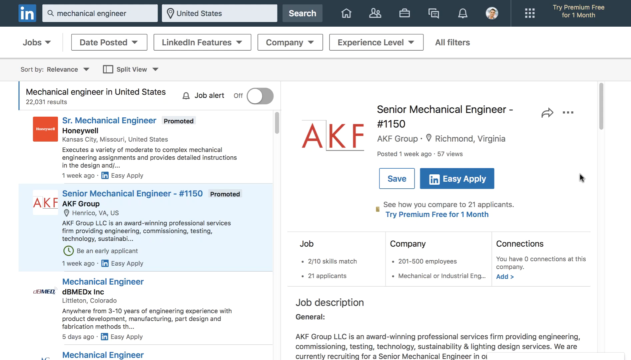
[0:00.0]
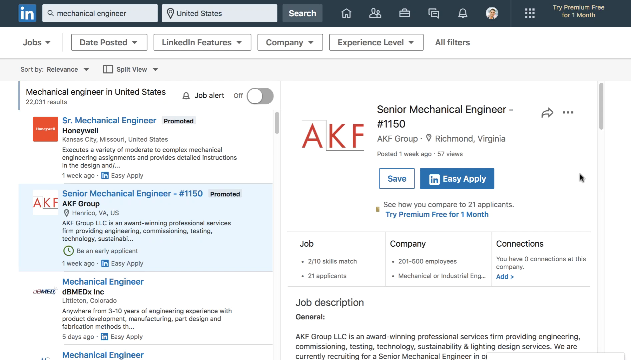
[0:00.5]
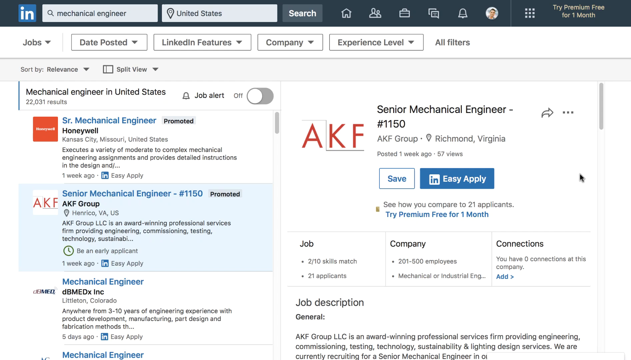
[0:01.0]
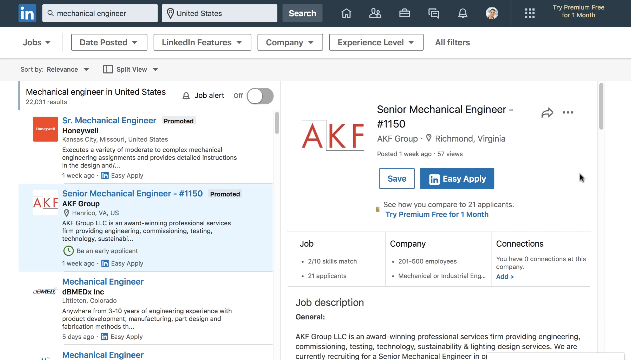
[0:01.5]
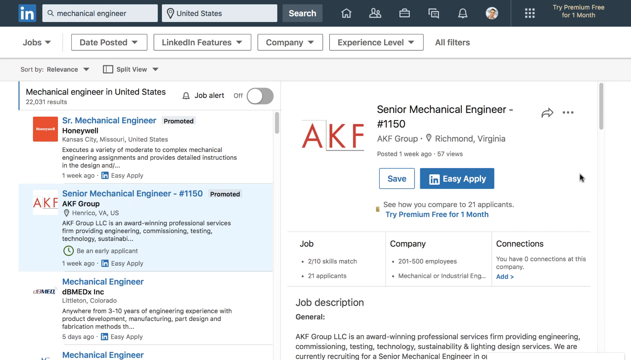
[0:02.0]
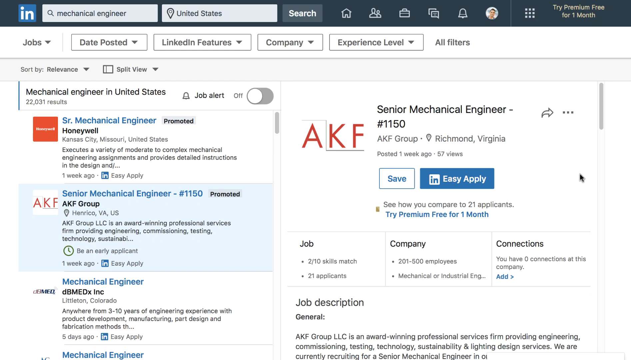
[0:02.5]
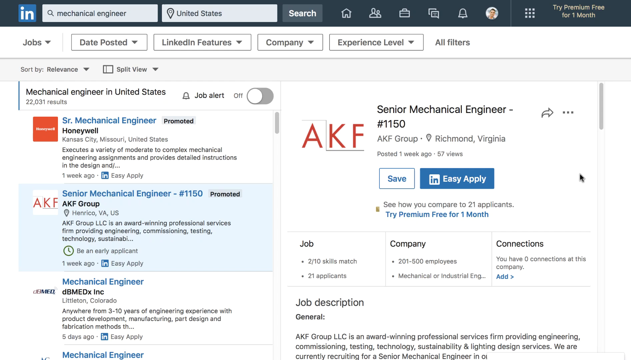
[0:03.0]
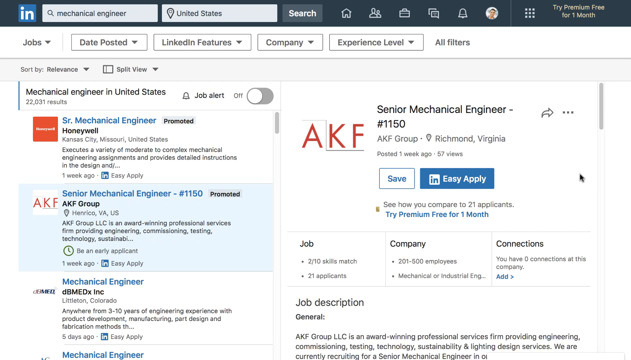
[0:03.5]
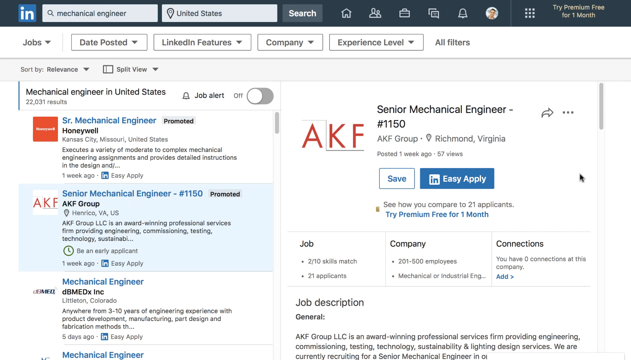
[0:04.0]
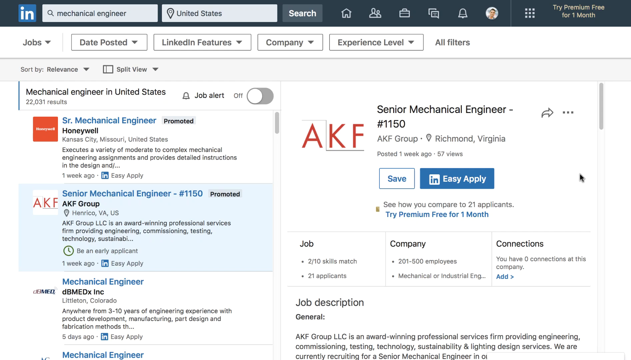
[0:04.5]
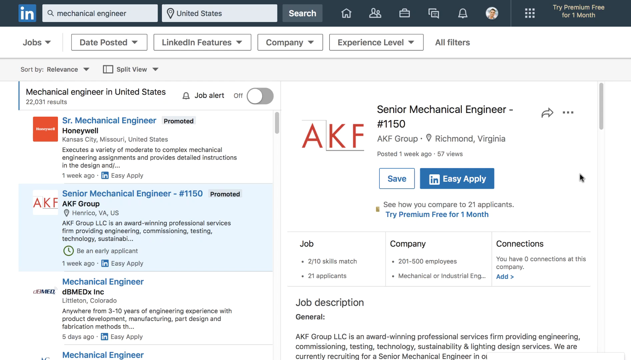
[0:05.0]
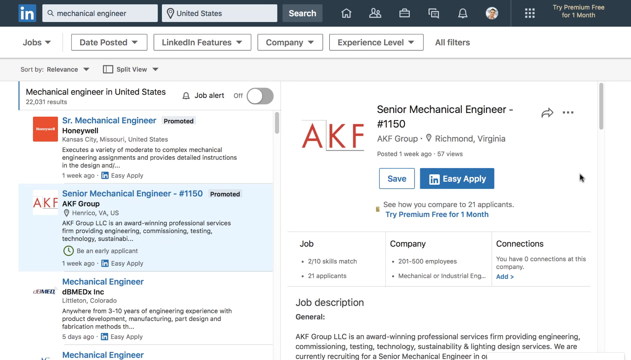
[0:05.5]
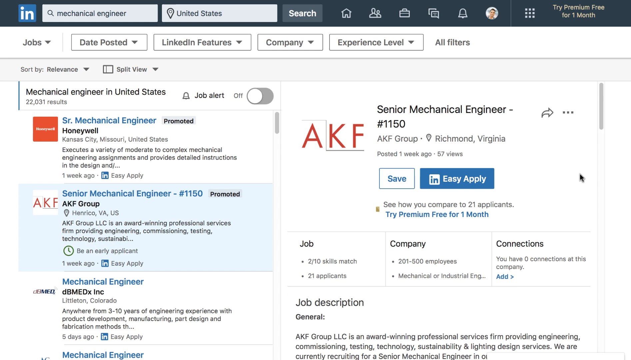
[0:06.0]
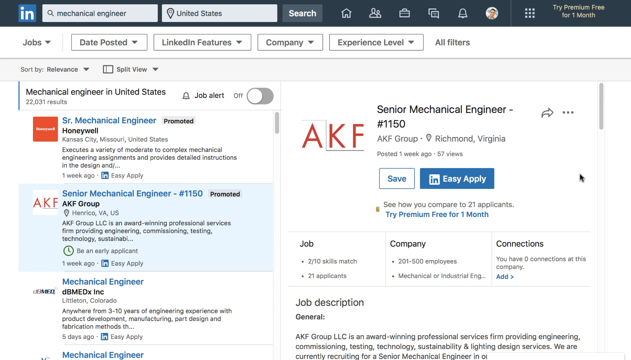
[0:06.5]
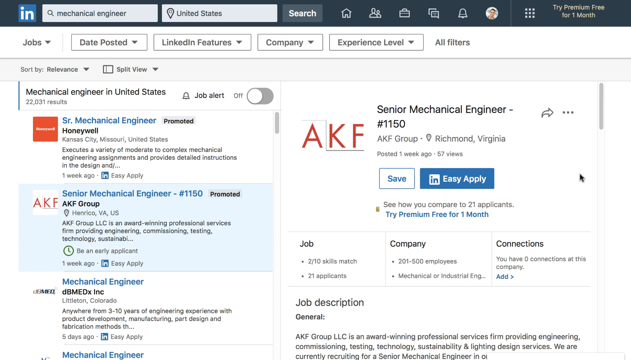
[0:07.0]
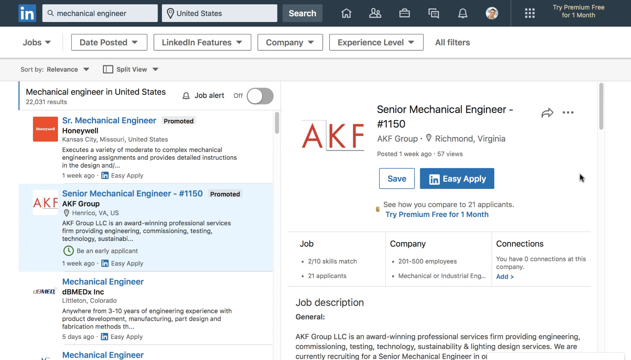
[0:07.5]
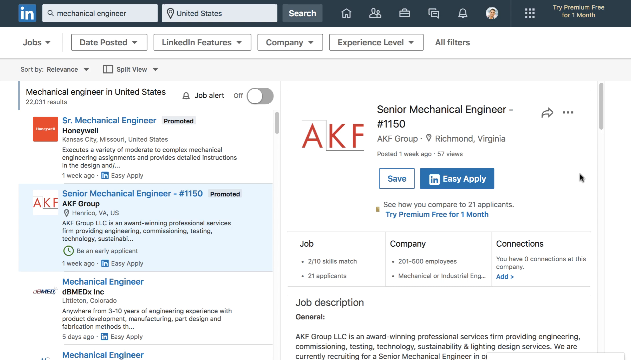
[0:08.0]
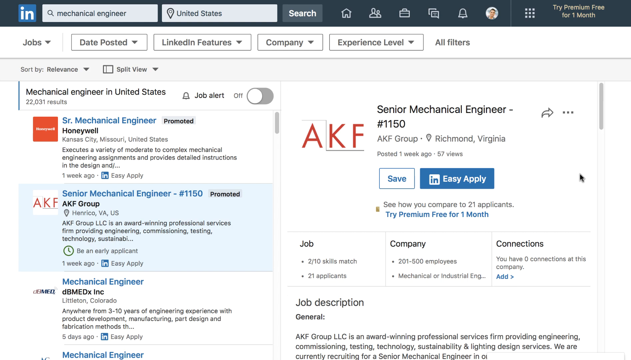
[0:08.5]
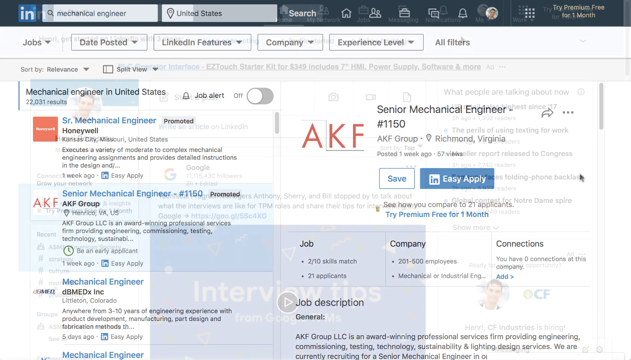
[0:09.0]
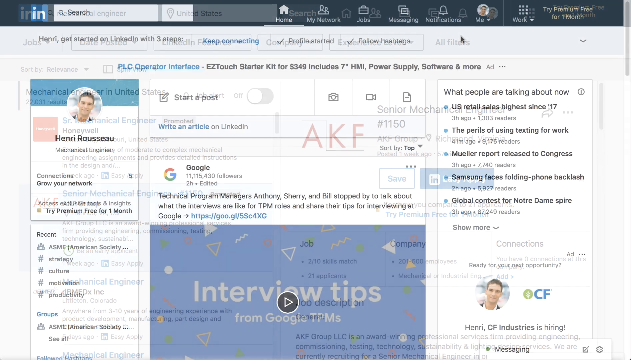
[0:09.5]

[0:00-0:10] The video opens on a LinkedIn web page where the user has searched the term Mechanical Engineer in the top left, with the region set to the United States. Several search results are listed: "SR Mechanical Engineer", a promoted ad result; "SR Mechanical Engineer-lb1150", also a promoted result; and the first non-ad result, Mechanical Engineer by DBMEDX Incorporated in Littleton, Colorado. It is a traditional Indeed web page with a blue tab at the top and an otherwise white page. On the right side of the screen there is an option to easy apply for the Senior Mechanical Engineer #1150 offer.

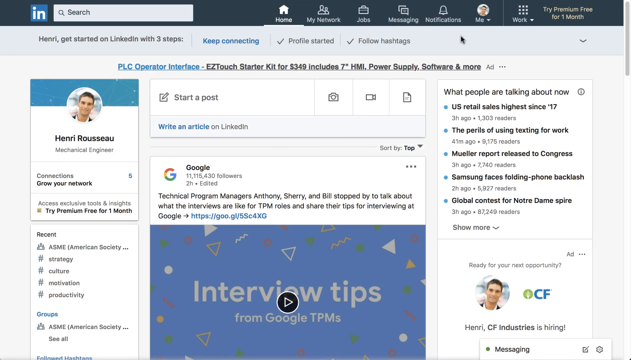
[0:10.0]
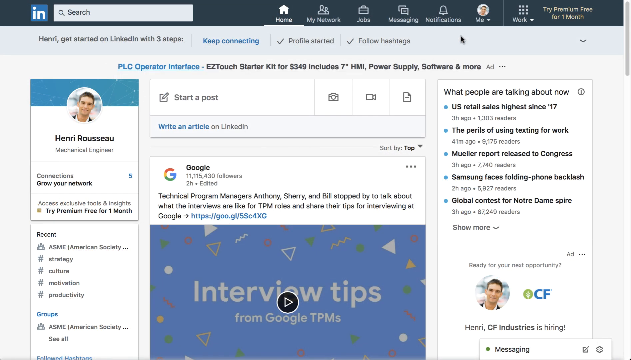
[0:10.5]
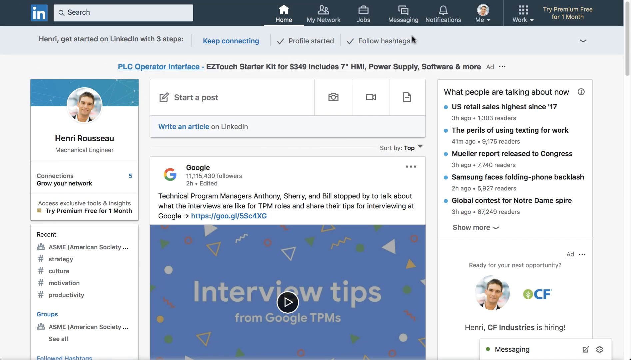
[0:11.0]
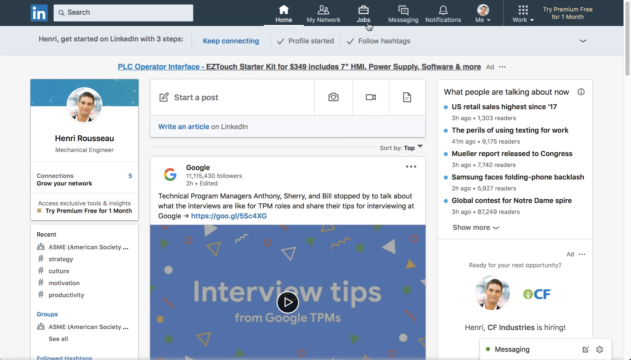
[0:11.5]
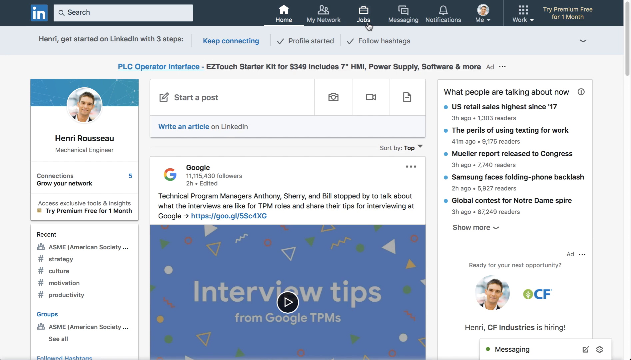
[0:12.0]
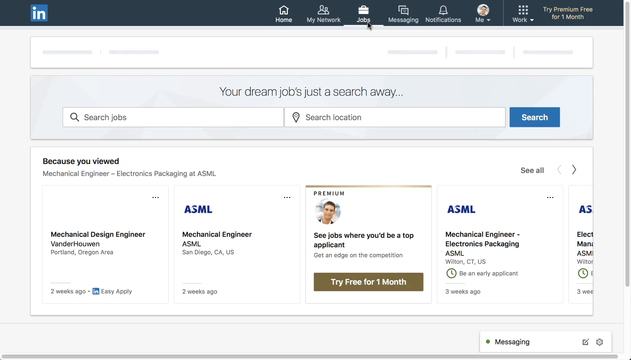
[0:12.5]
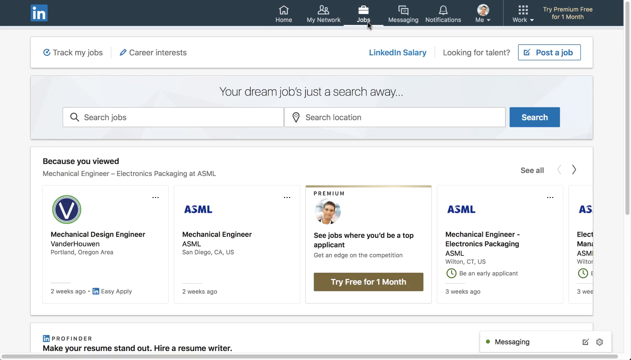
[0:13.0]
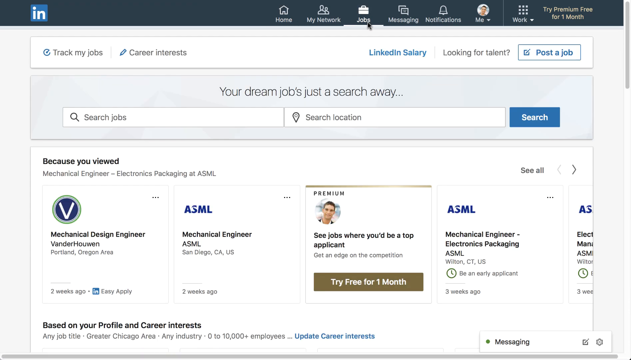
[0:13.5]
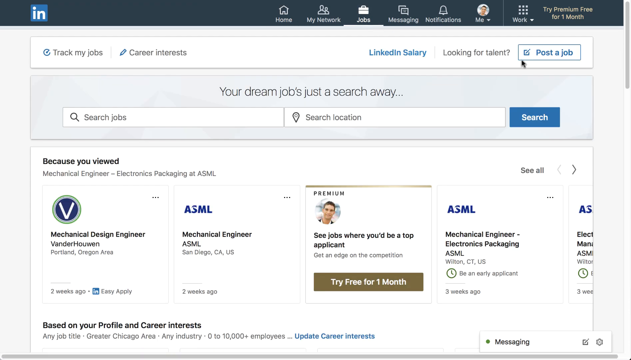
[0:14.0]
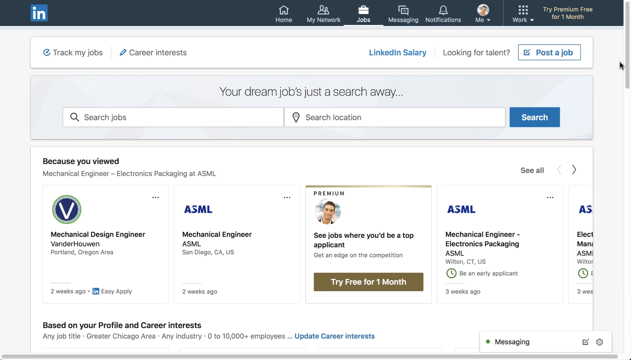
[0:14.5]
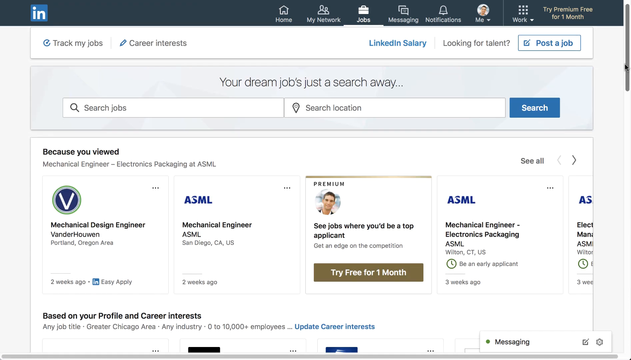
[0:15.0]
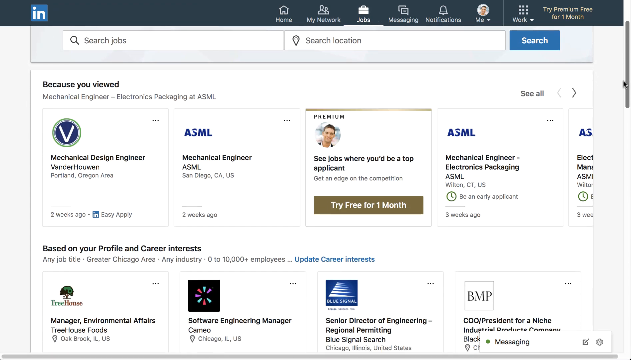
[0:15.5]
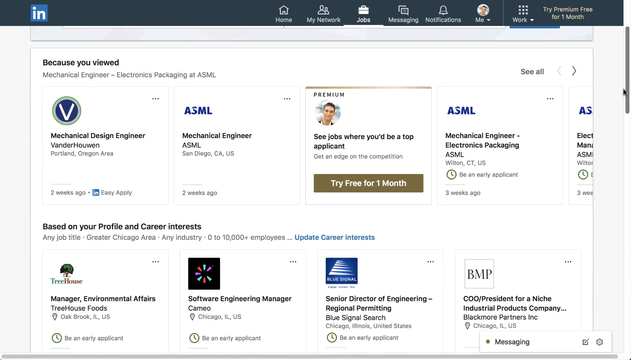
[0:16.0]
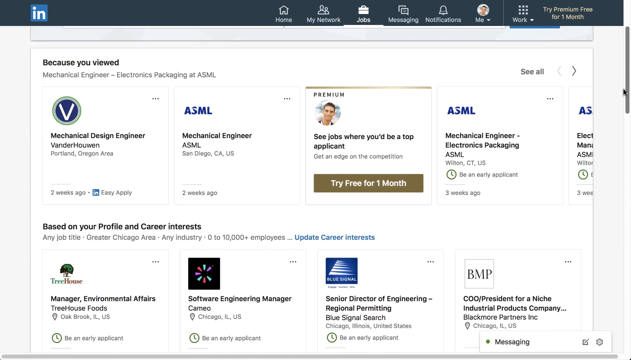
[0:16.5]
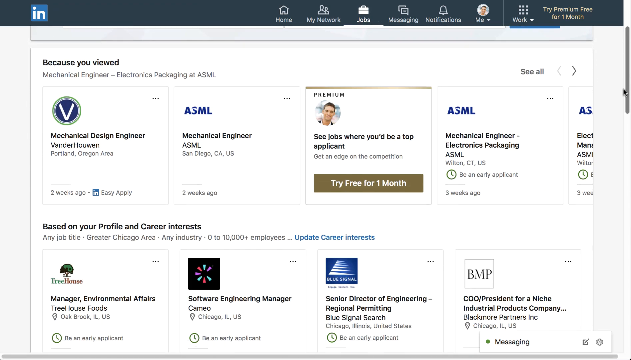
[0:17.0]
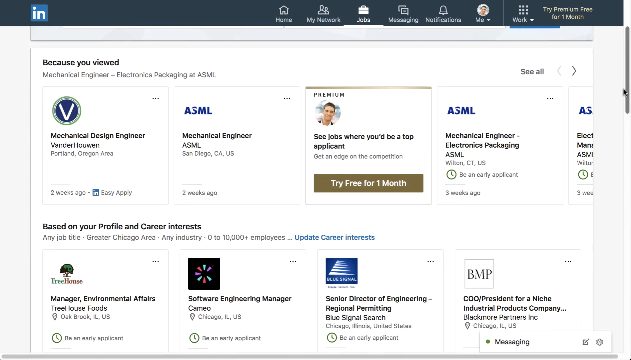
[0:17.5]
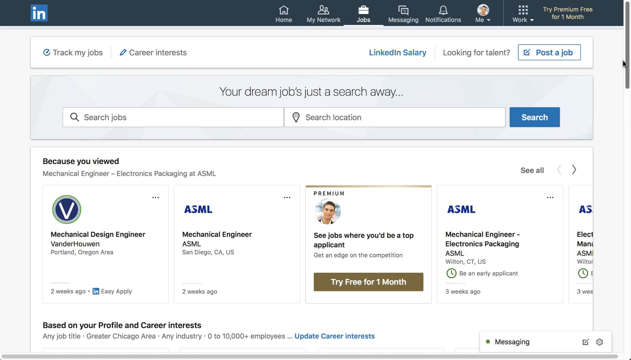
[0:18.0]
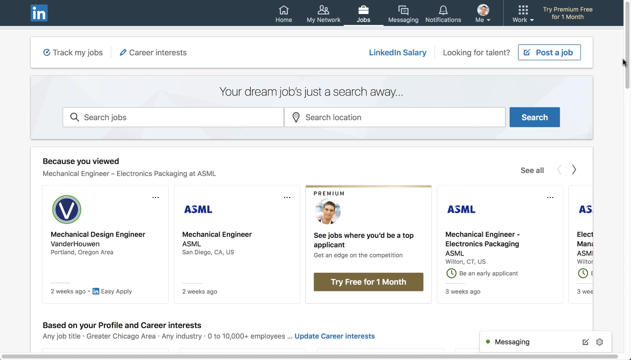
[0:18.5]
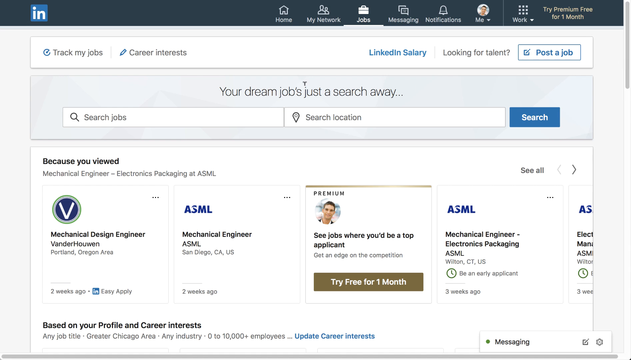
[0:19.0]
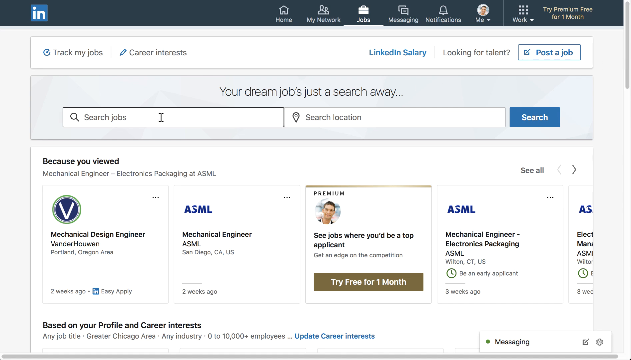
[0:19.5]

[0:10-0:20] The screen transitions to someone's personal page. It appears to be the user's own home page, based on the profile picture labeled "me" at the top of the bar matching the profile picture shown on the page. On the left, the user is named Henri Rousseau and is listed as a mechanical engineer. The user goes from the profile page to the jobs listing page, which shows the same content as the opening page. They slowly scroll down the jobs listing page, scroll back up, and then click into the job search field.